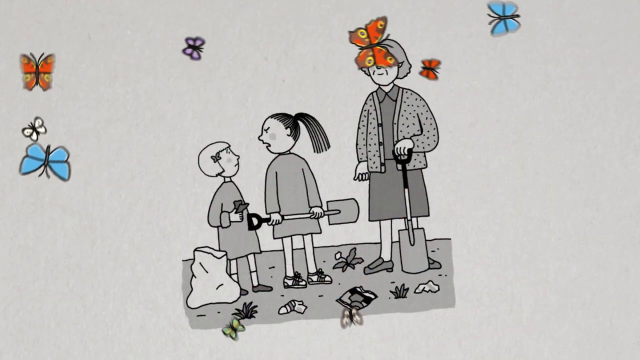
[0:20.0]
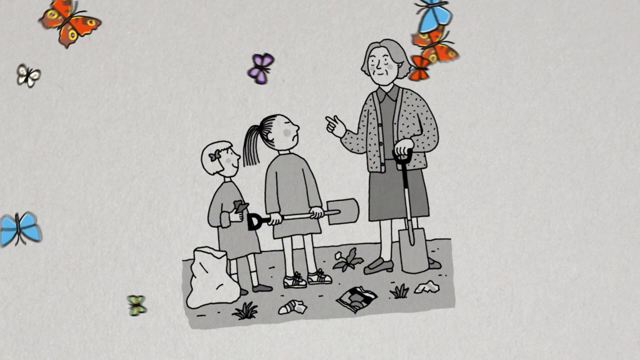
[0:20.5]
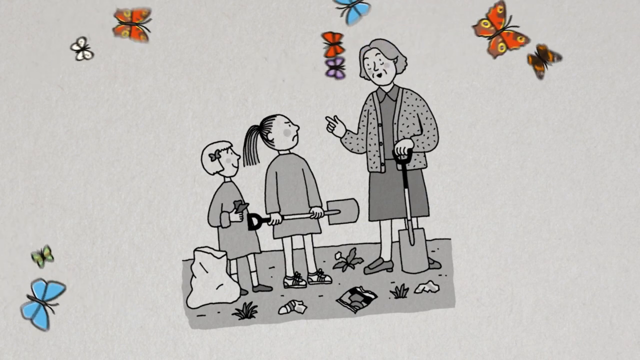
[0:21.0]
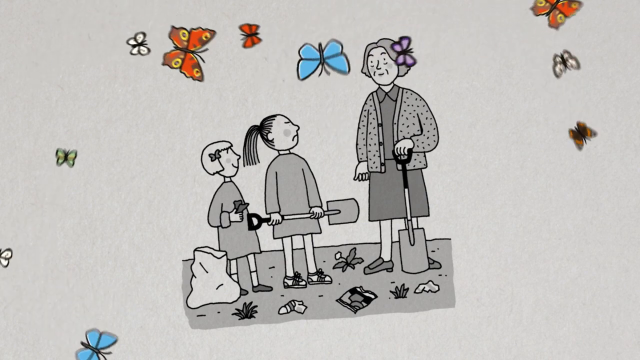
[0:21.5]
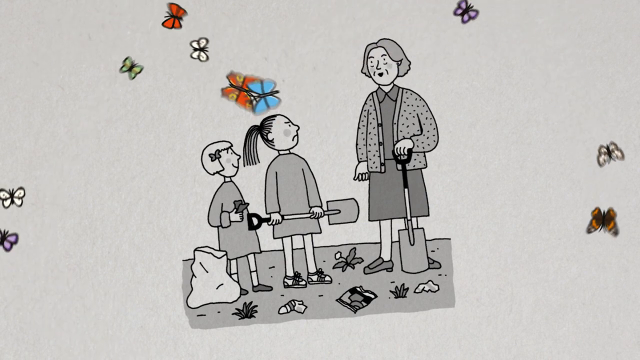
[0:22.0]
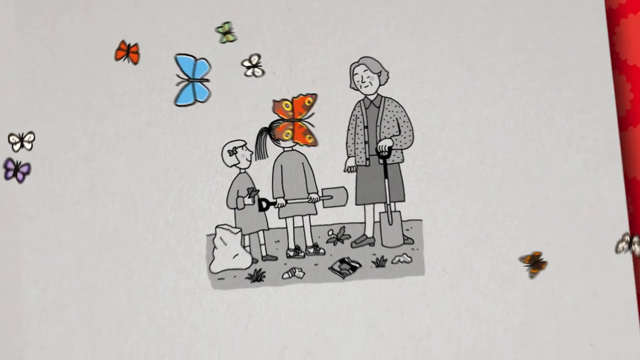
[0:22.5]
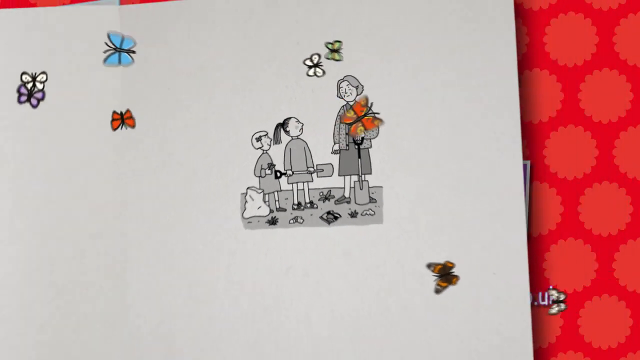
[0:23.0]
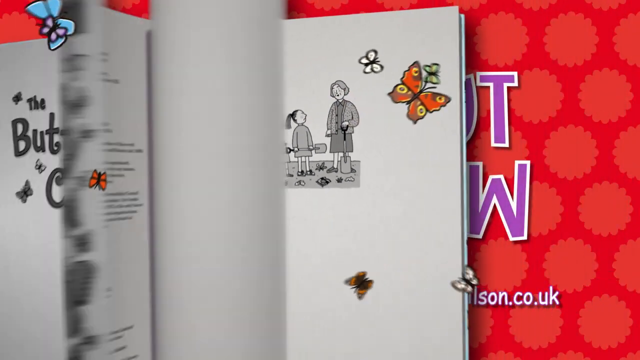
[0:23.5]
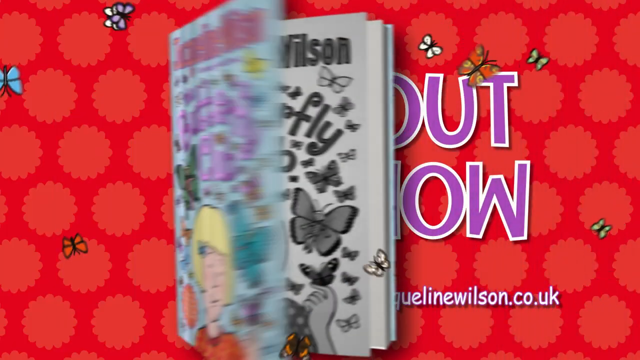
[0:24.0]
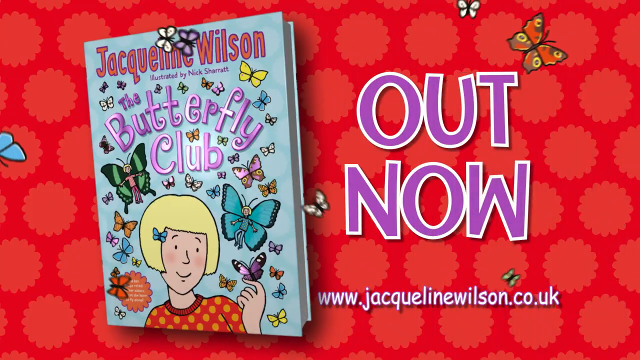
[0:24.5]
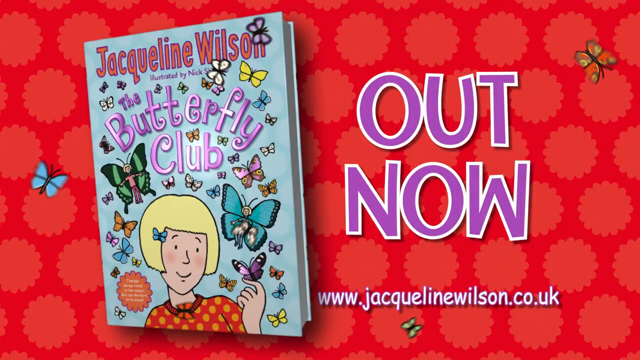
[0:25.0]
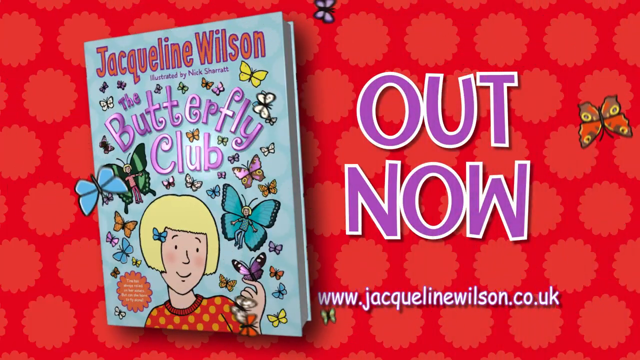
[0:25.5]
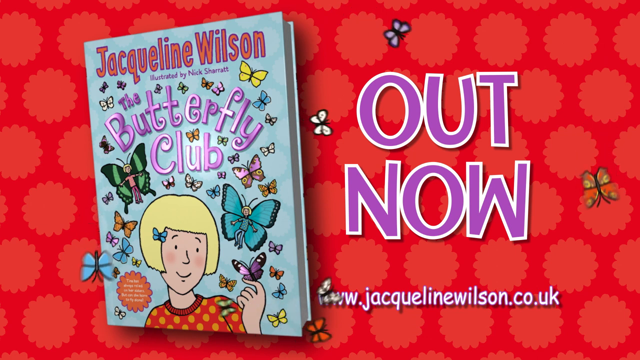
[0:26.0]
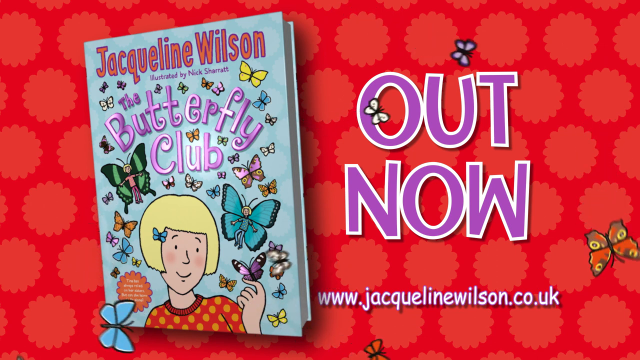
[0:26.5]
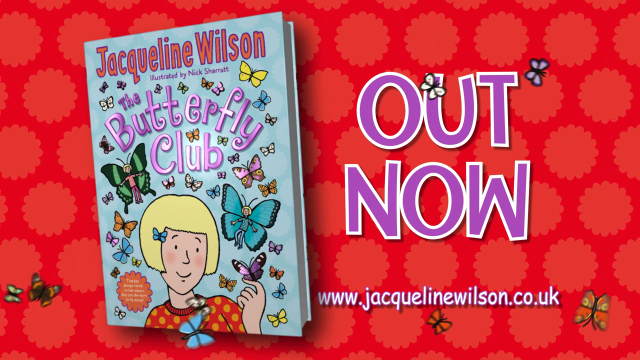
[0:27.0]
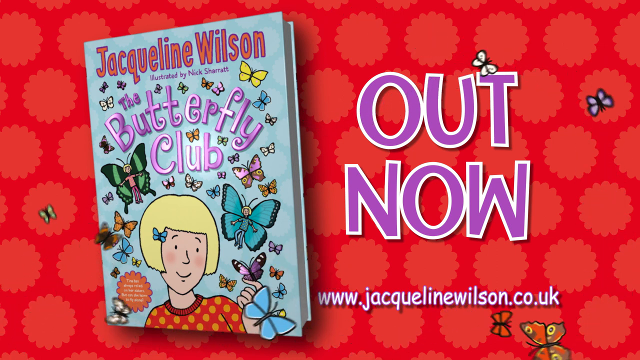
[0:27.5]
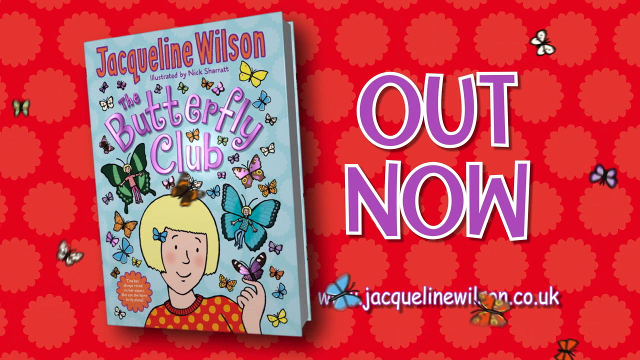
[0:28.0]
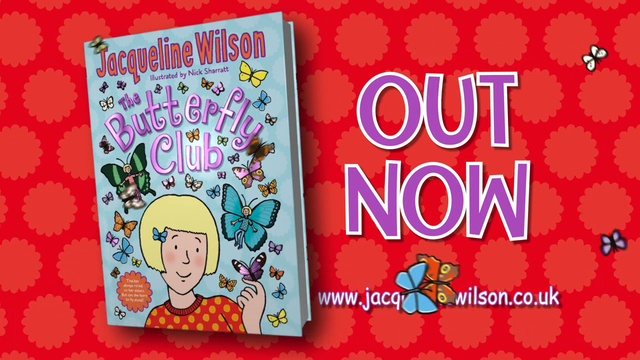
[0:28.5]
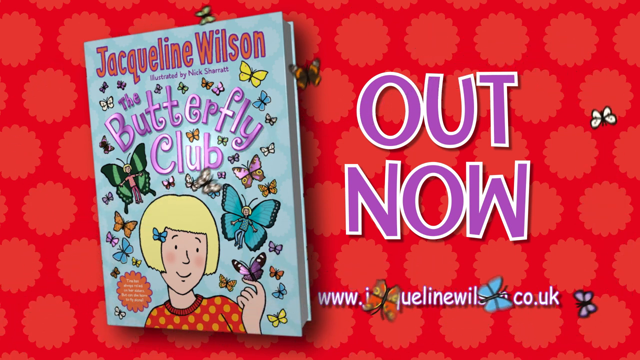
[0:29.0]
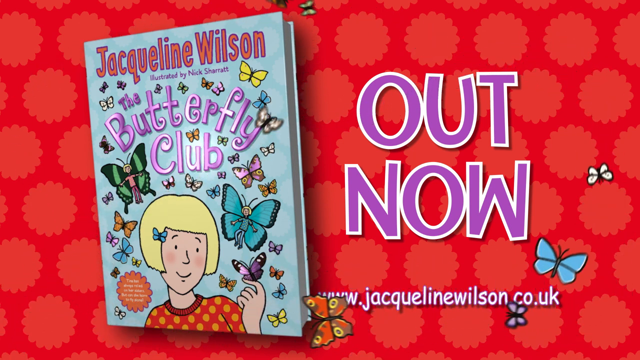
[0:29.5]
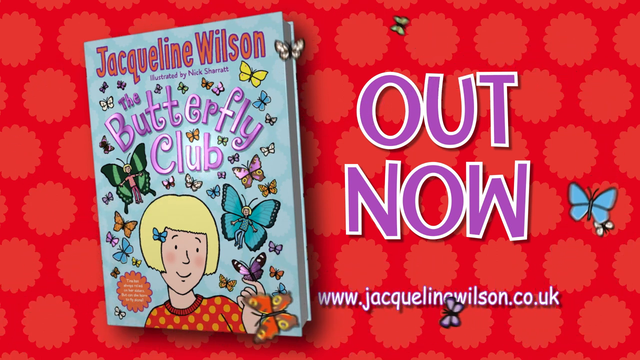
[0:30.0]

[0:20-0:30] Jacqueline Wilson, apparently the writer, is shown alongside puppets or drawings from what looks like a children's picture book. Figures dance and hold hands while butterflies move. A crocodile appears, and then a figure that looks like a dinosaur with a waggling tail. Pictures show three humans and children holding hands, and a flying dragon. Three different figures appear, one of them black and two of them playing together. A flying dog is also part of the book. Finally, the cover of the book is shown, with a human on it.